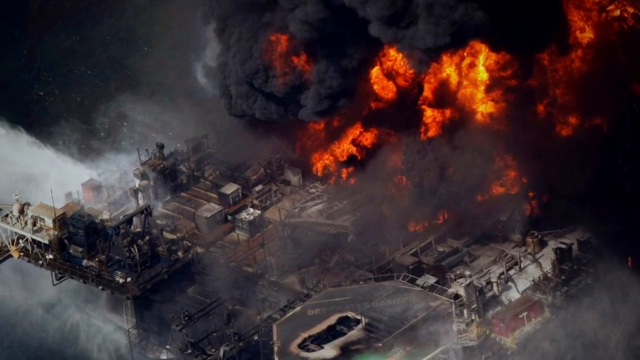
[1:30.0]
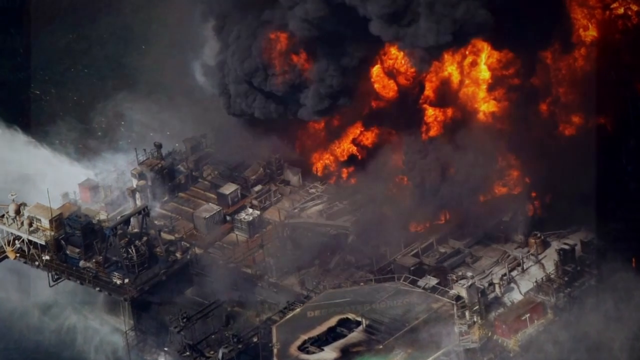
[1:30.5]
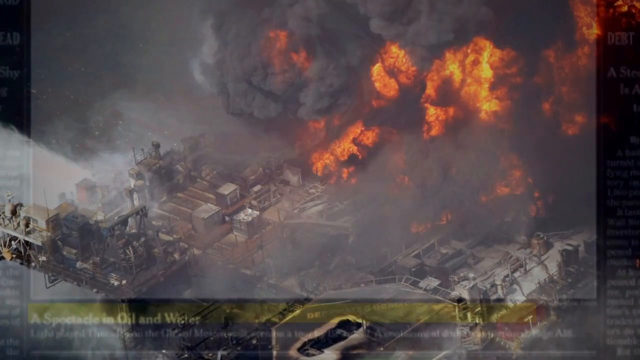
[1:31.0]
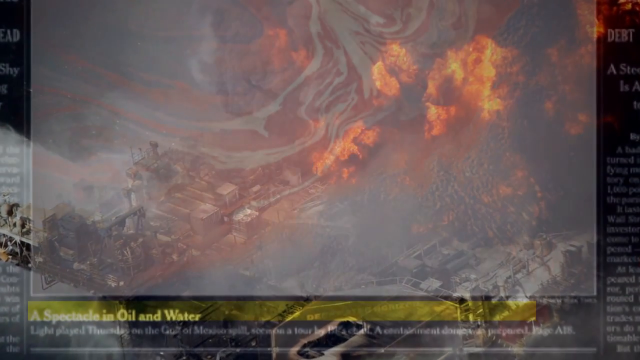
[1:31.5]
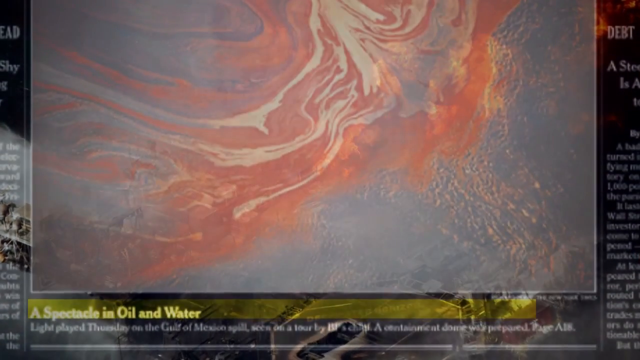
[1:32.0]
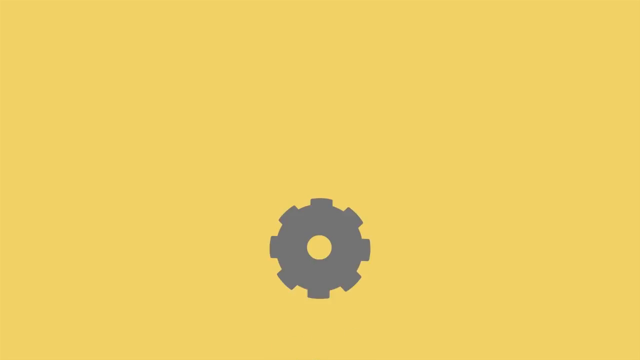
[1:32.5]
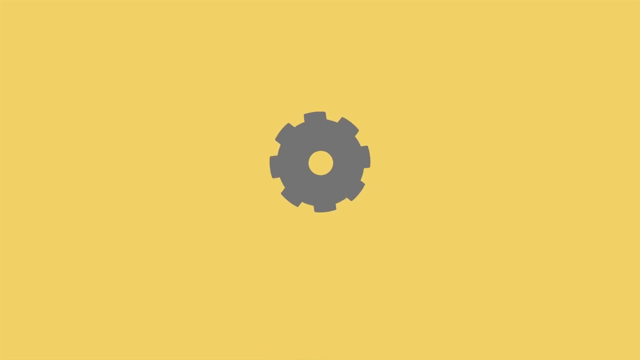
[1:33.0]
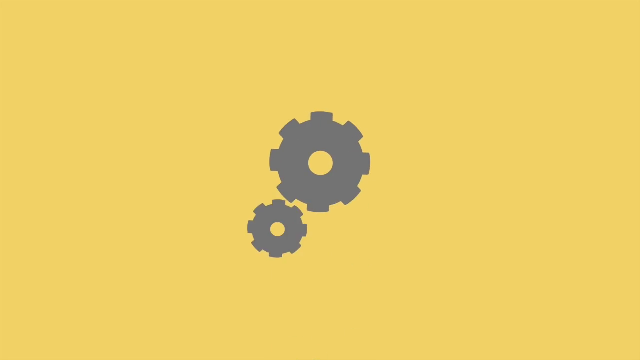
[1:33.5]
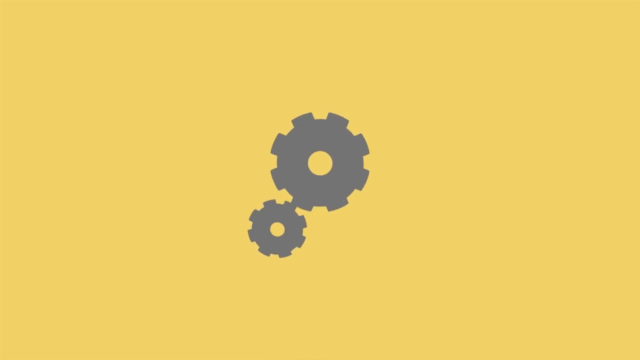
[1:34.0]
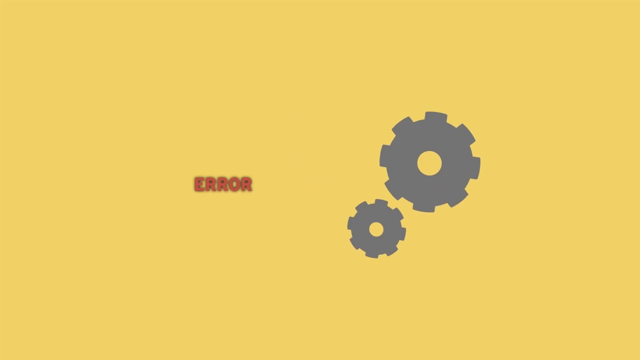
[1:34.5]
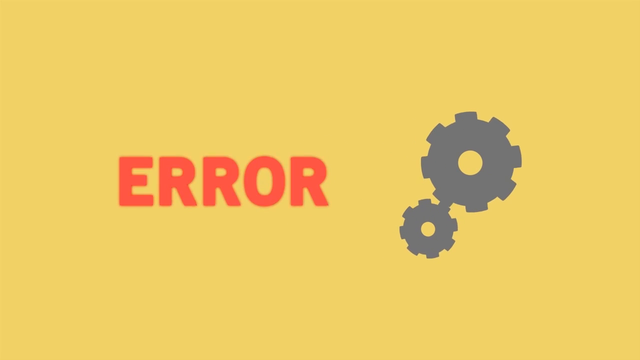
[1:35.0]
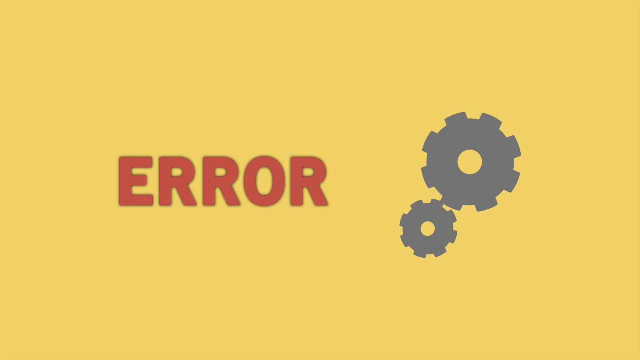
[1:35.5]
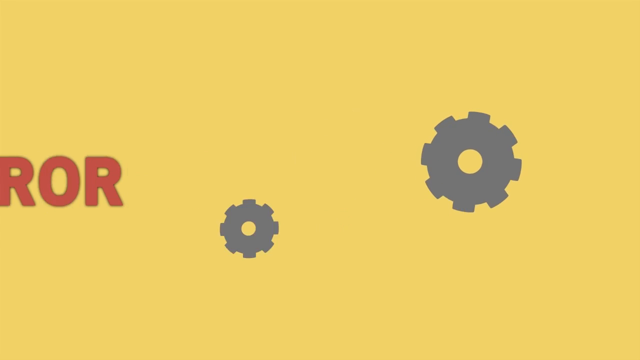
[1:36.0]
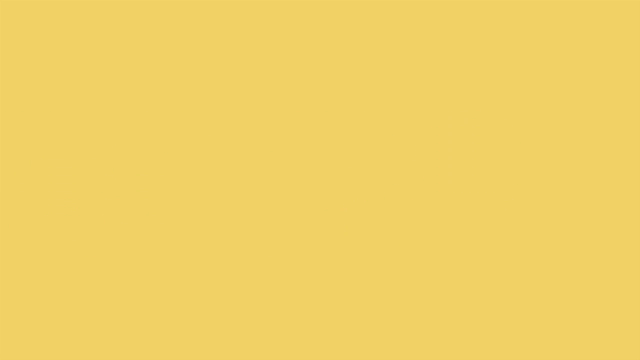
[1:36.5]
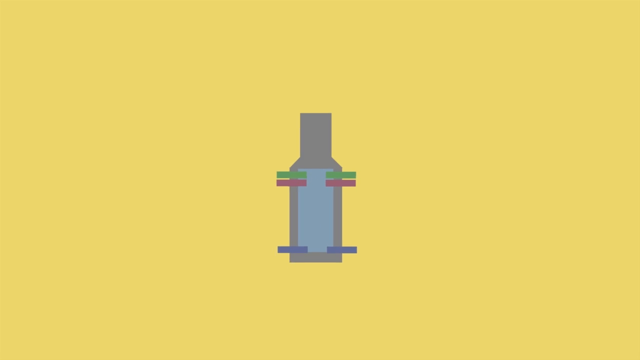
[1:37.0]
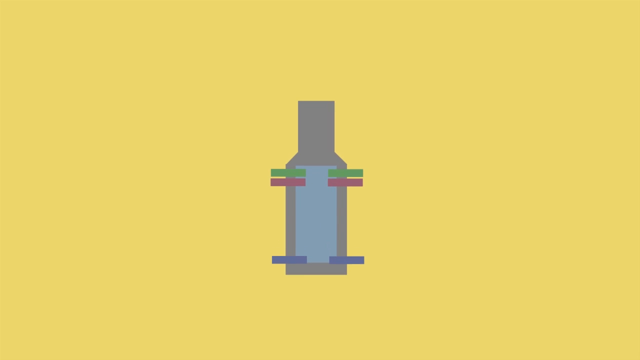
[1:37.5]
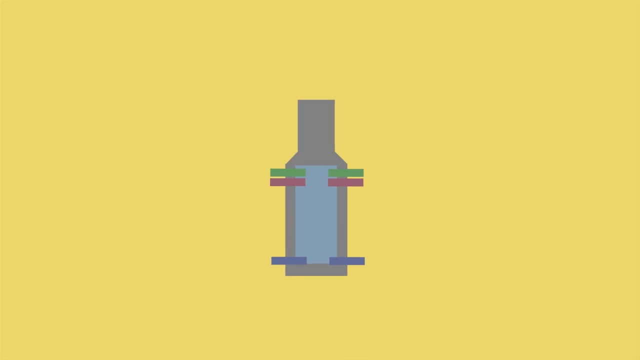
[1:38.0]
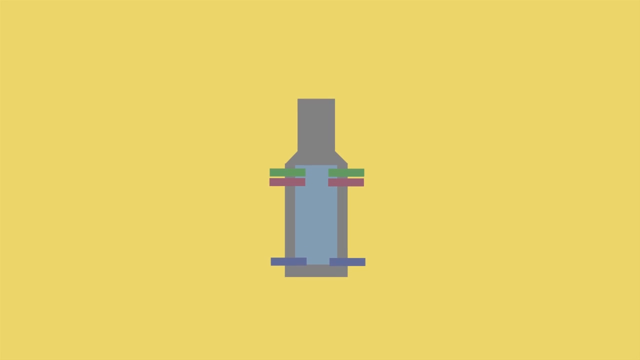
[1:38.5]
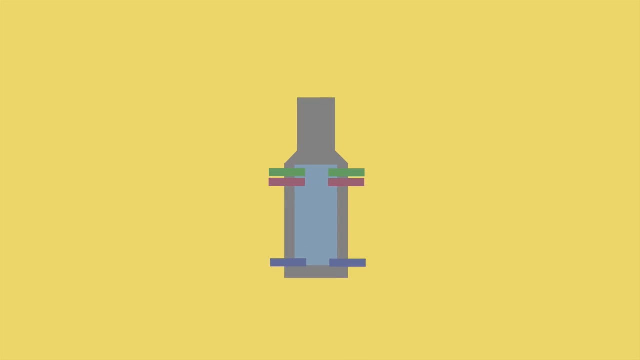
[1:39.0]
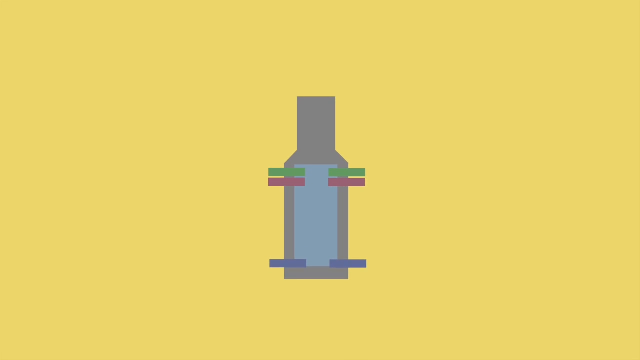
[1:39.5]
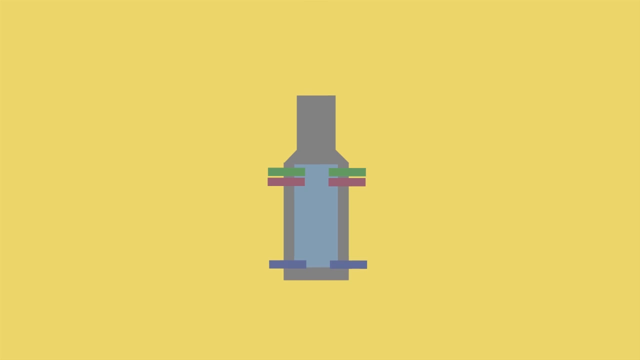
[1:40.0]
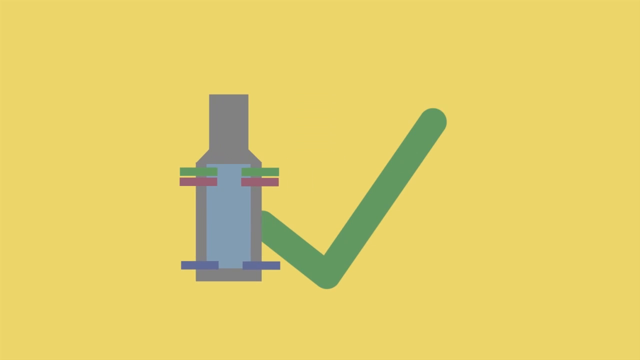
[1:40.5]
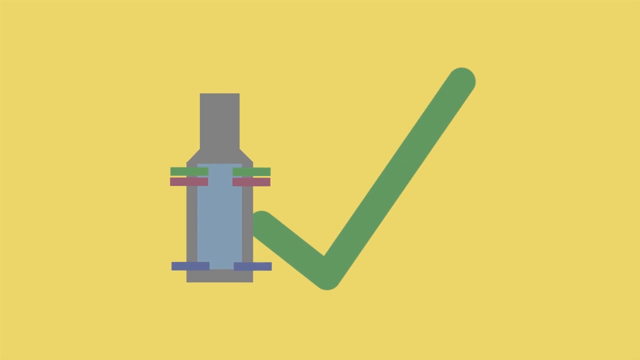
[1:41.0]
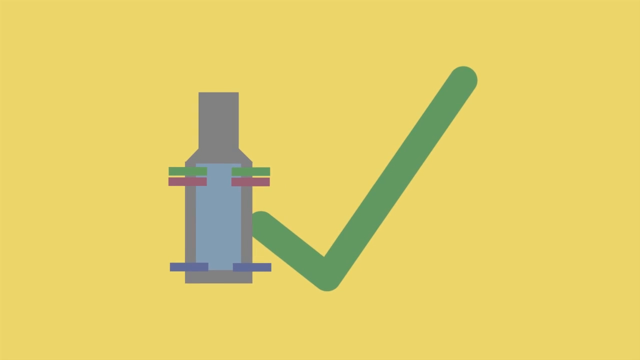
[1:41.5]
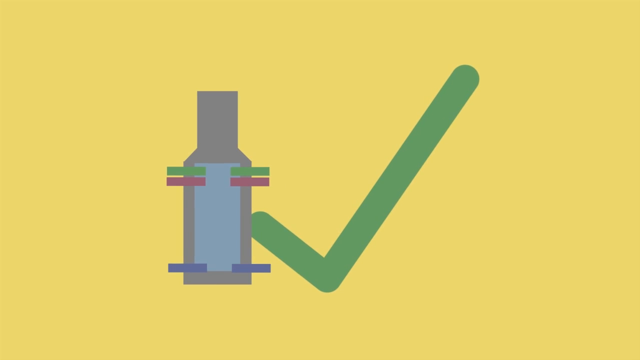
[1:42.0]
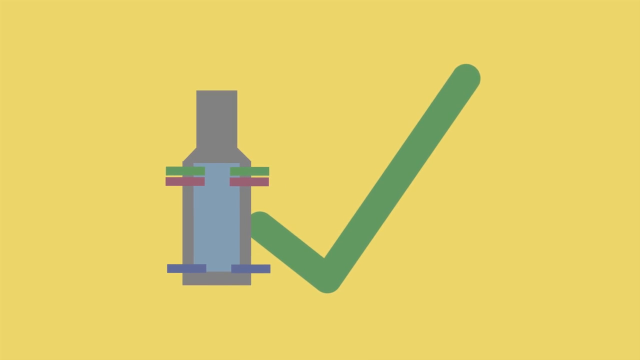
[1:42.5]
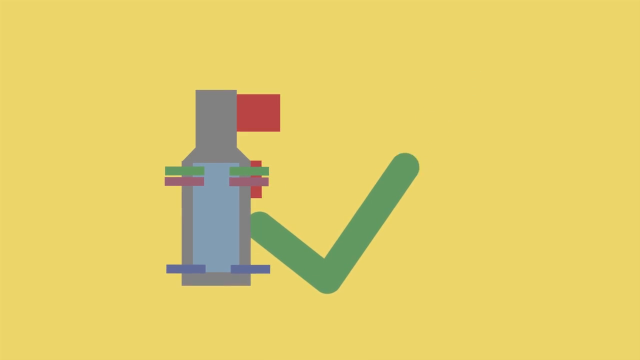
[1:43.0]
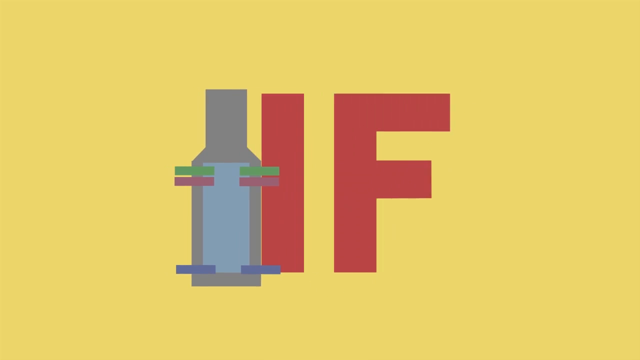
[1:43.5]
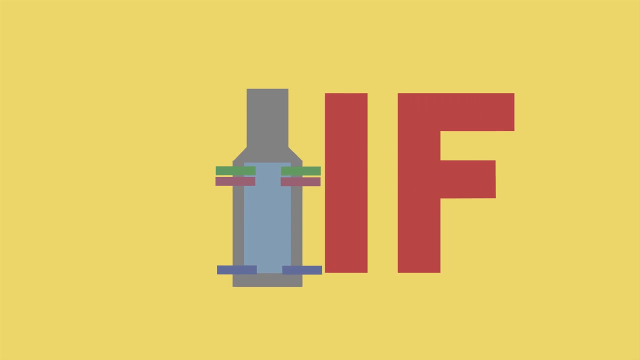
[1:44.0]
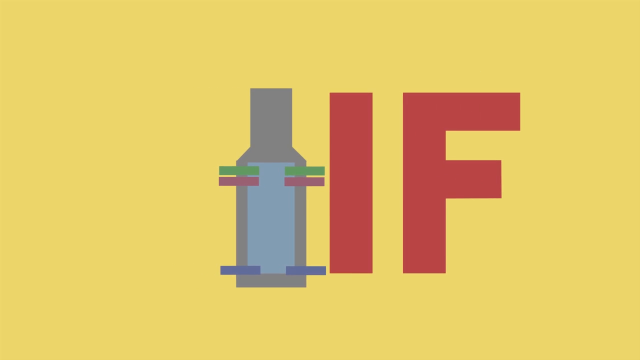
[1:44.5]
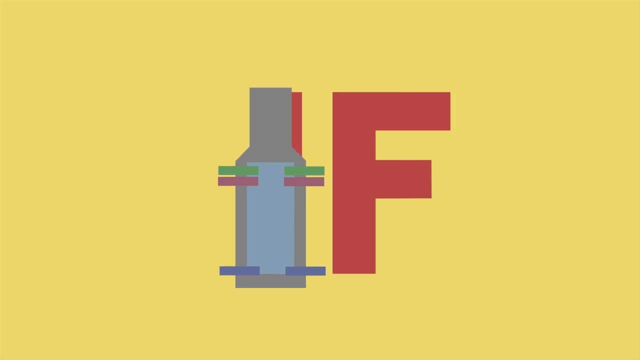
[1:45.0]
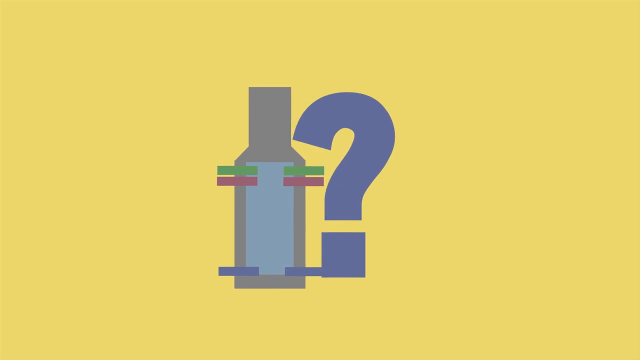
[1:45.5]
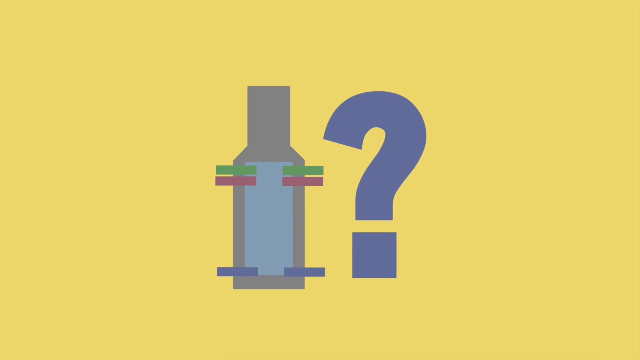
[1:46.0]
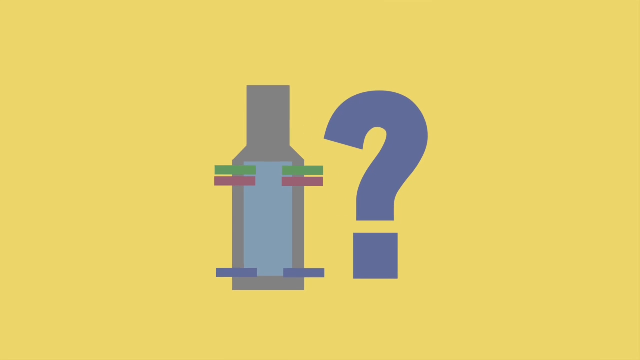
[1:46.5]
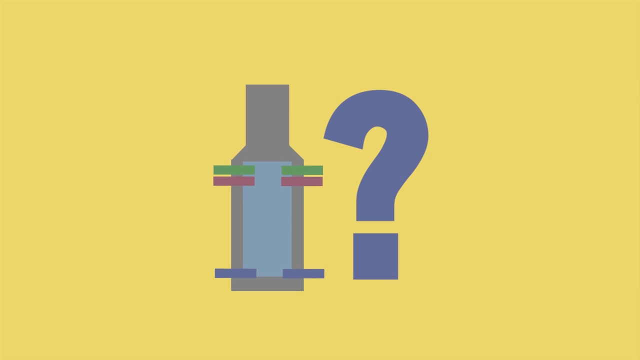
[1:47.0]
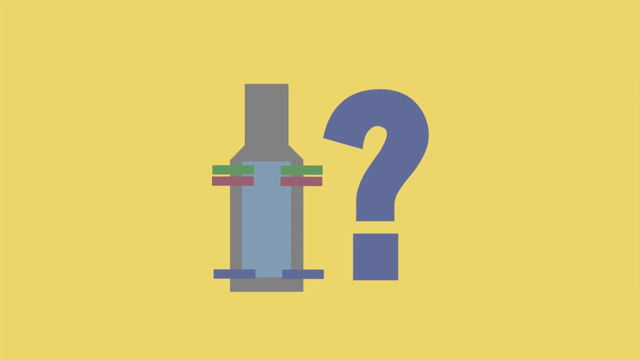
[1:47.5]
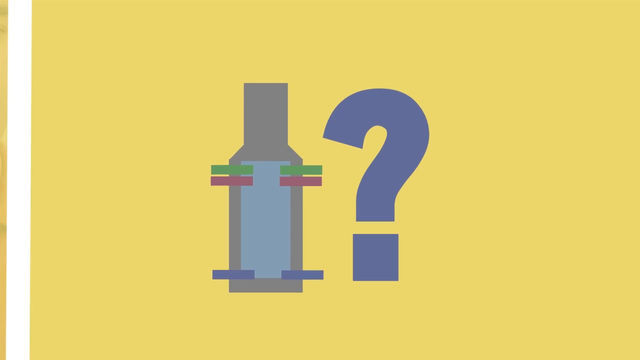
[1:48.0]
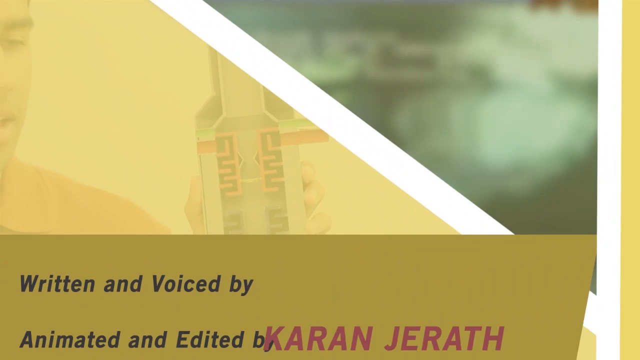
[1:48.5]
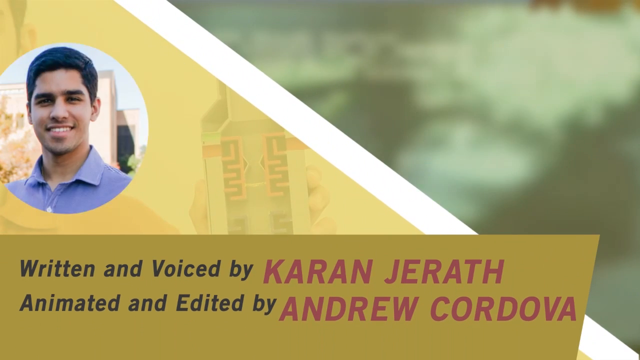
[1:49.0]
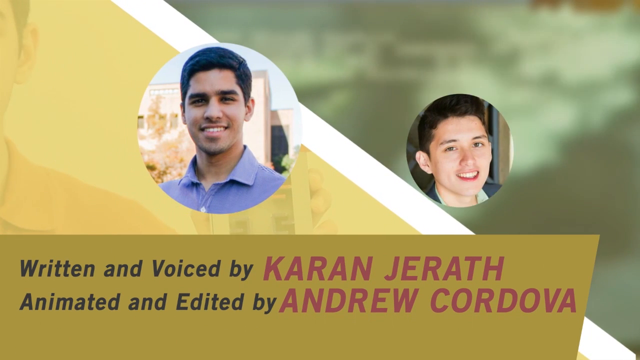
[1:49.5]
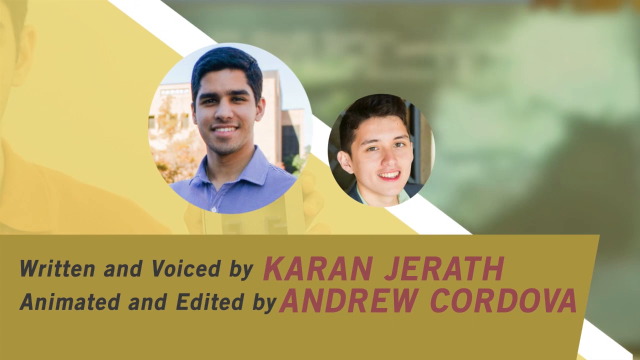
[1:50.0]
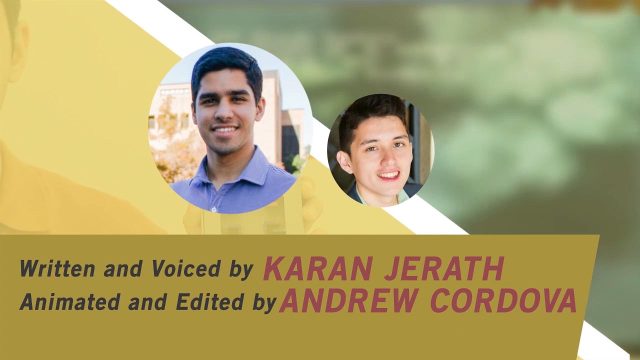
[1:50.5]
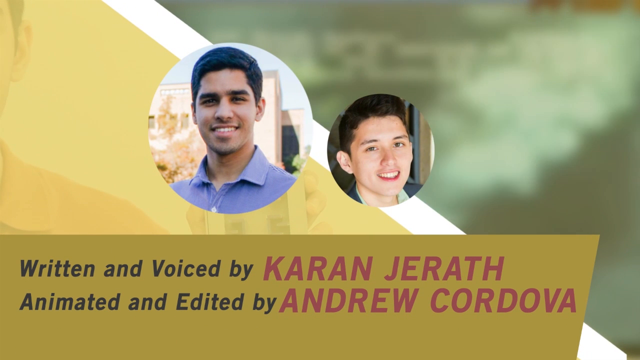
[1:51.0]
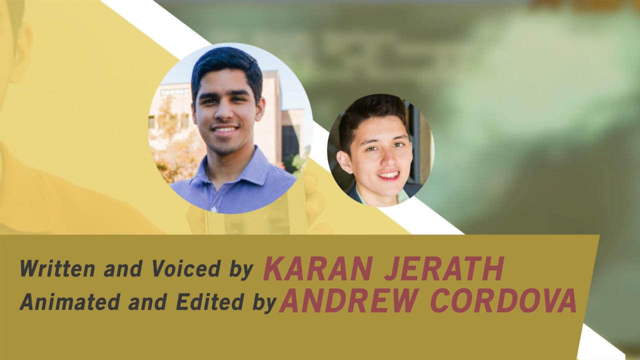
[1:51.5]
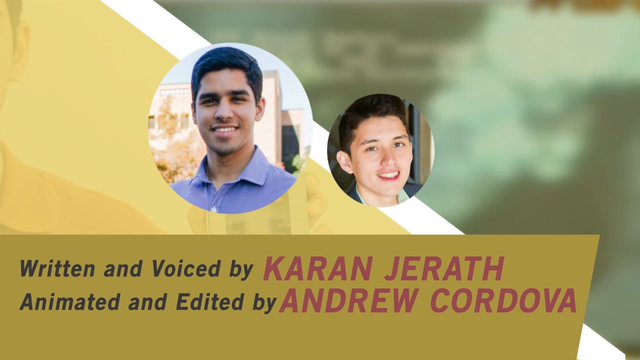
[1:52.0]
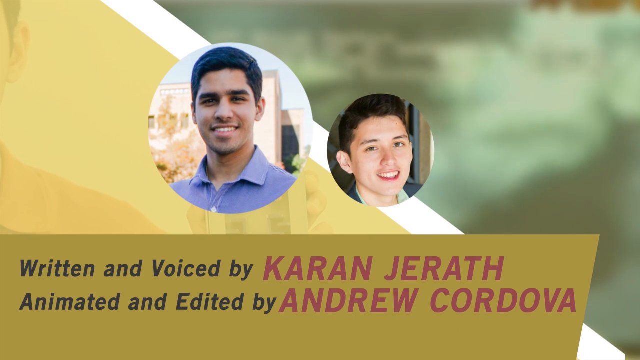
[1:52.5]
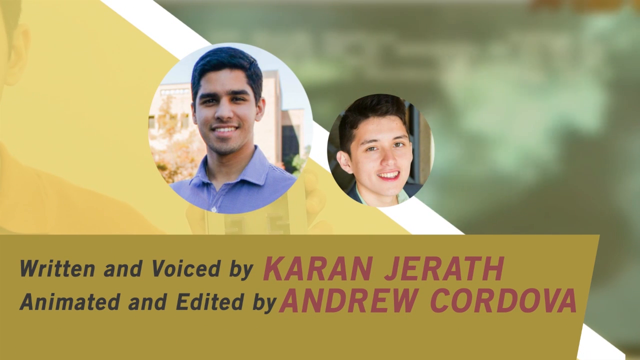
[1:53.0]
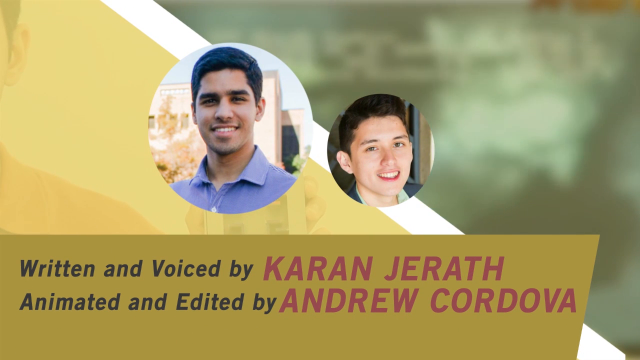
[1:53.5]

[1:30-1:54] Credits appear, including "animated by Andrew". The video apparently shows that if the BP device is not located where it is supposed to be, it will be a danger to the people. Two young men who developed the device are shown; they look to be in their 20s. There is fire at the end of the video.